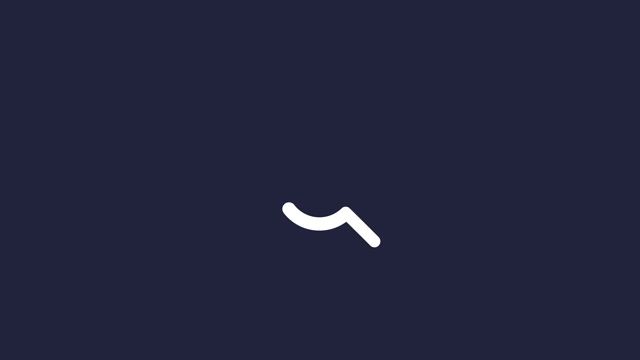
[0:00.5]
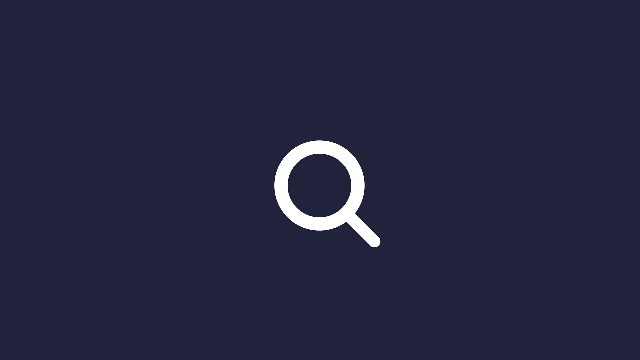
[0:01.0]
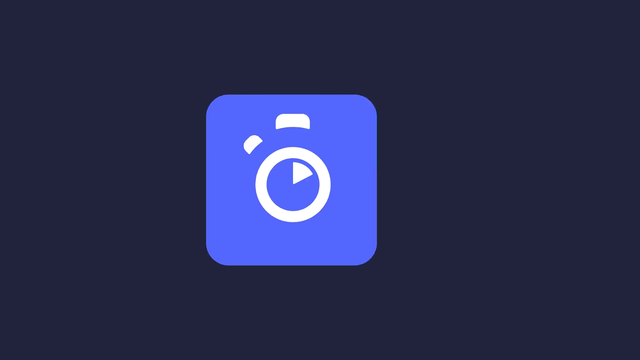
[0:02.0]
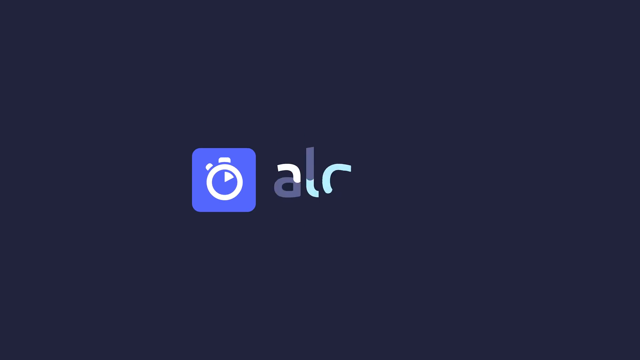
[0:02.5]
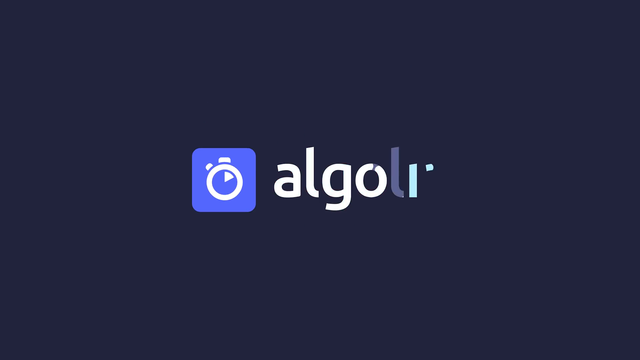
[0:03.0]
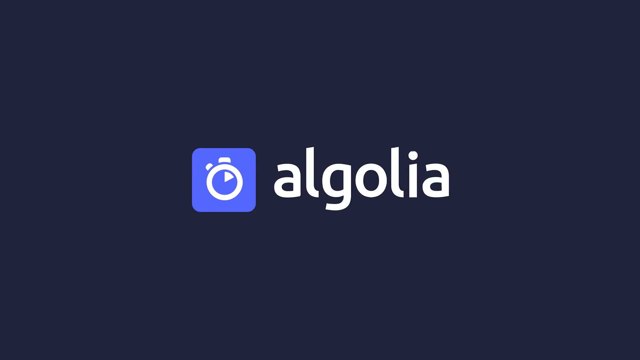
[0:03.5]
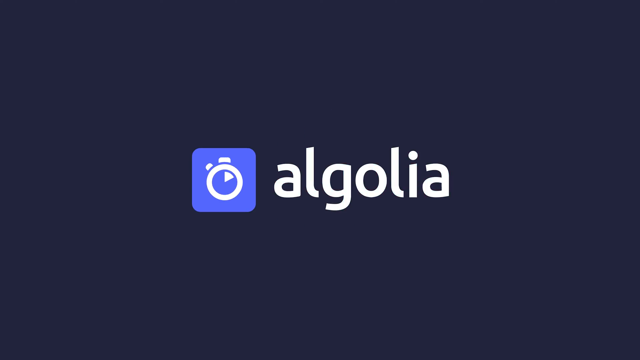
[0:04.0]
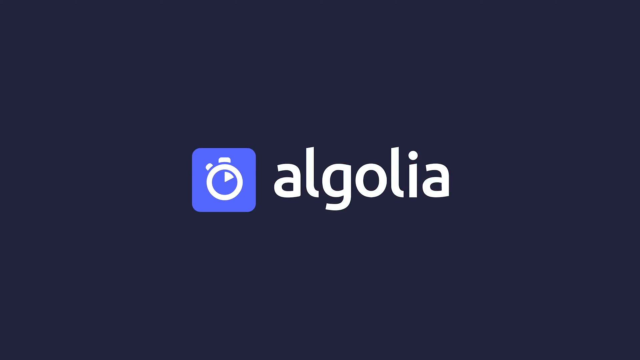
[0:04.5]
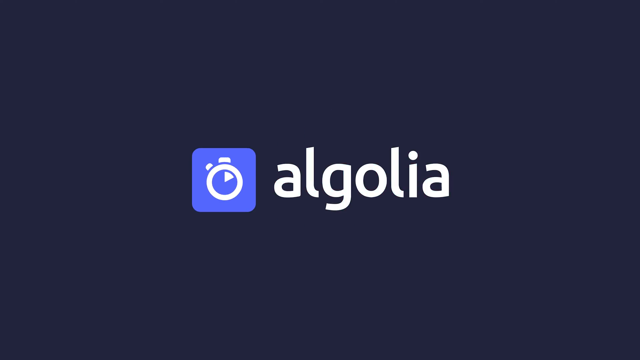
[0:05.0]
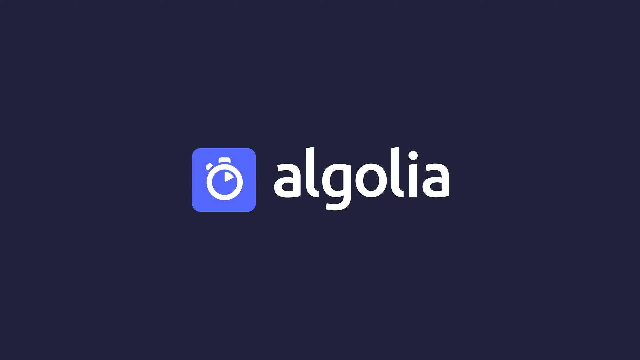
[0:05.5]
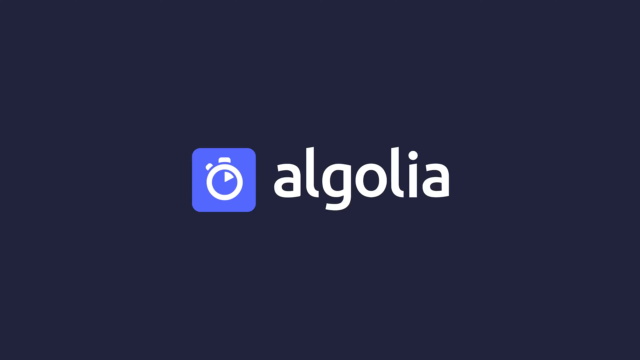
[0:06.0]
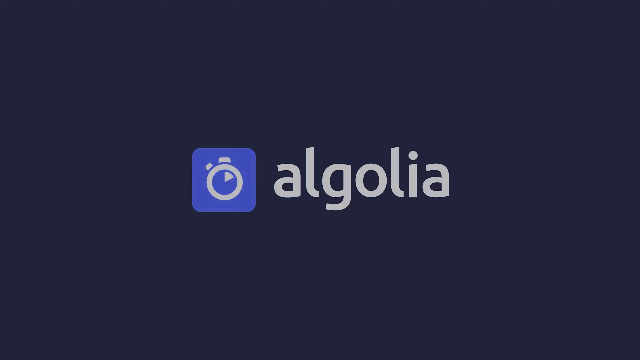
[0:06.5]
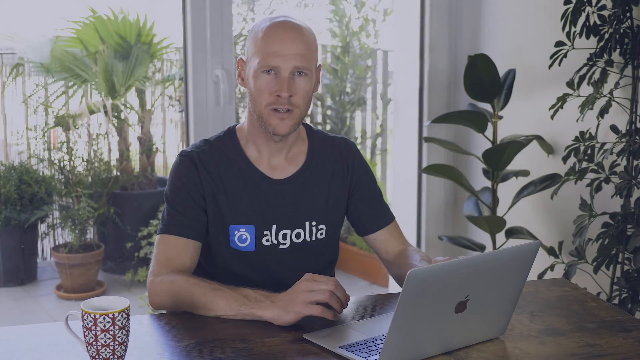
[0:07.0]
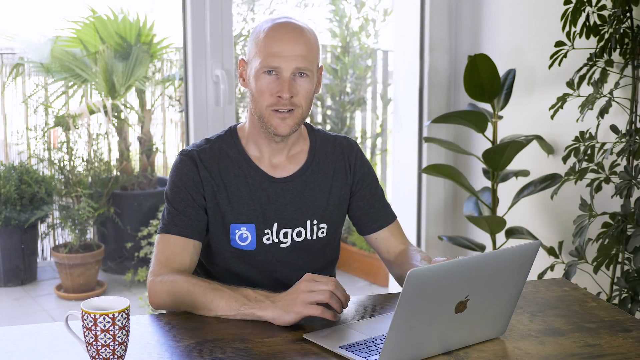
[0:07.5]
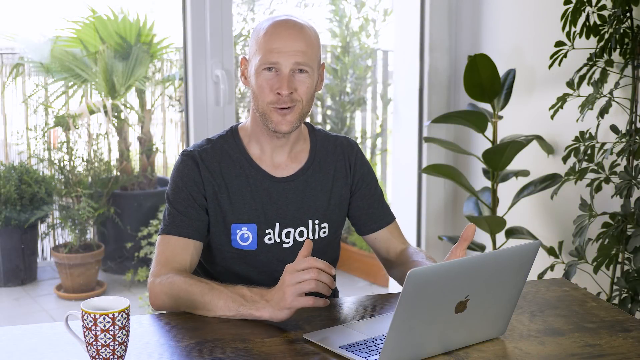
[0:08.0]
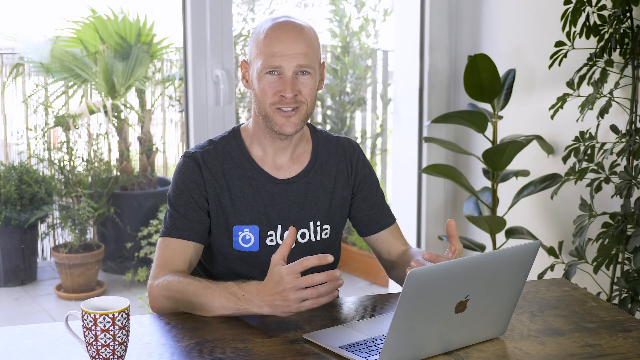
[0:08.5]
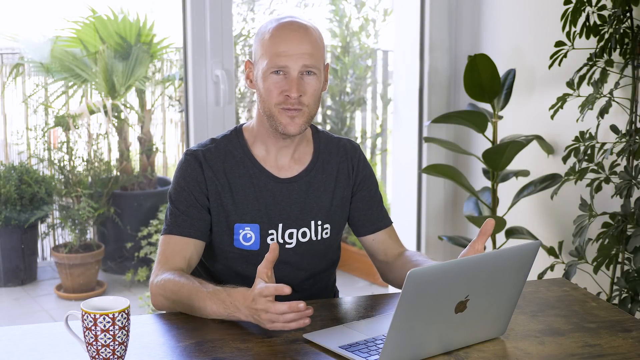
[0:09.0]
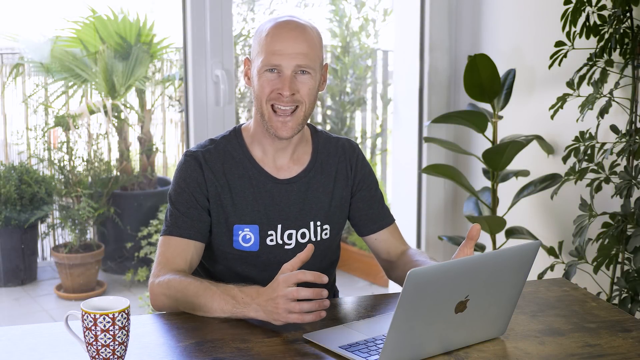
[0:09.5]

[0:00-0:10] A screen shows a company called Algolia, spelled A-L-G-O-L-I-A, along with a little stopwatch. A bald man sits in his house, like in a kitchen, wearing a black t-shirt with "Algolia" in white. Next to the word is a timer; it is in blue, but the timer itself is white. There are house plants all around him, some of them outside, and he is on a Mac computer. He talks.